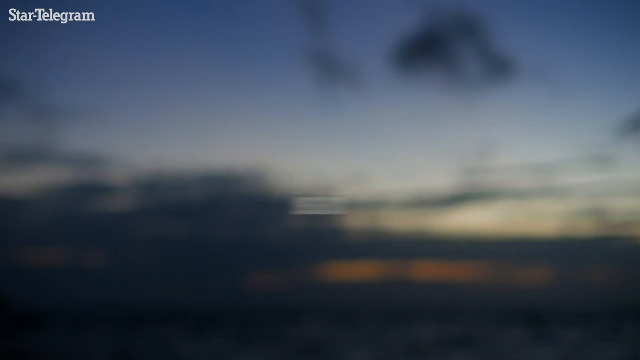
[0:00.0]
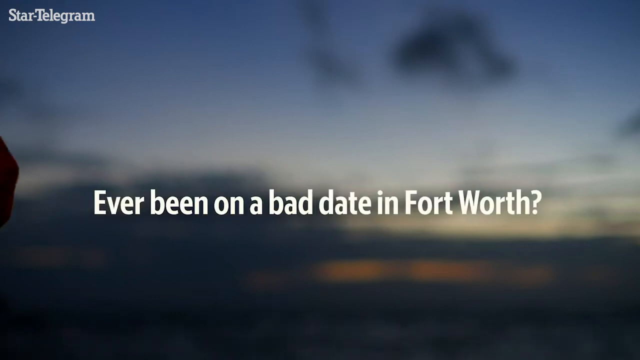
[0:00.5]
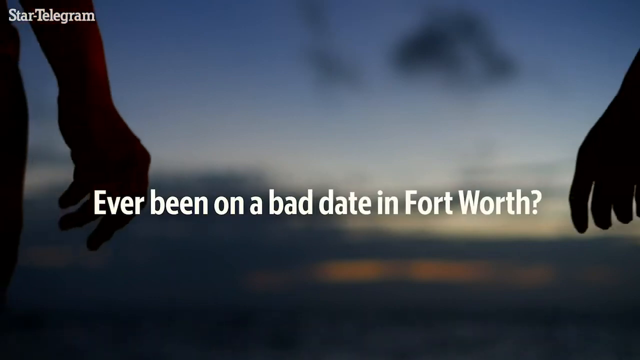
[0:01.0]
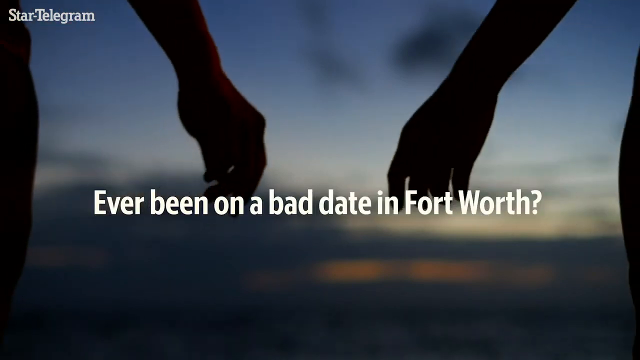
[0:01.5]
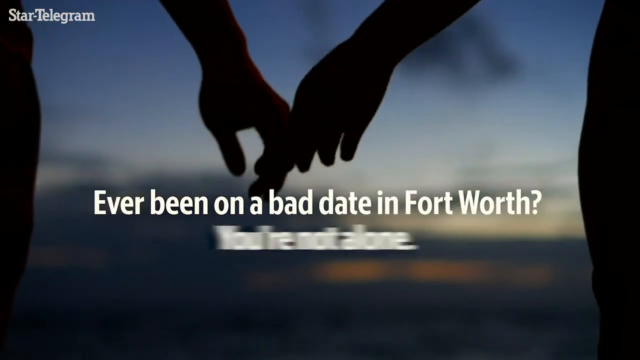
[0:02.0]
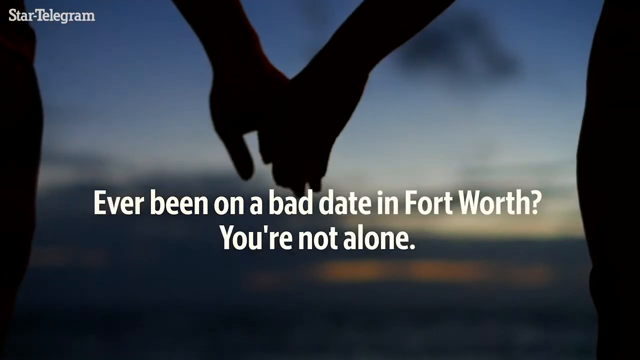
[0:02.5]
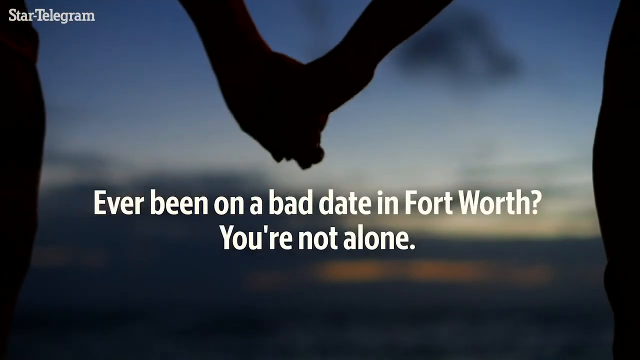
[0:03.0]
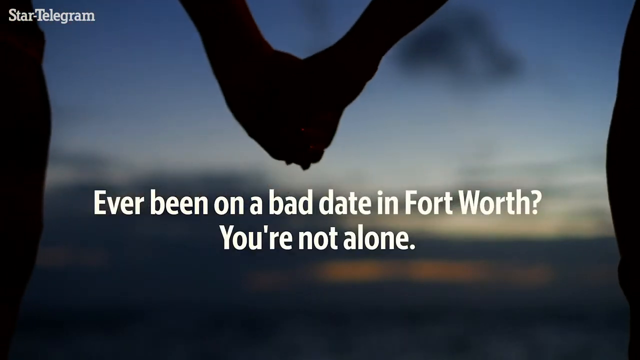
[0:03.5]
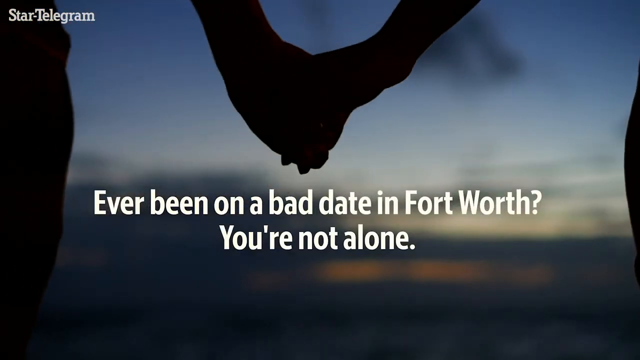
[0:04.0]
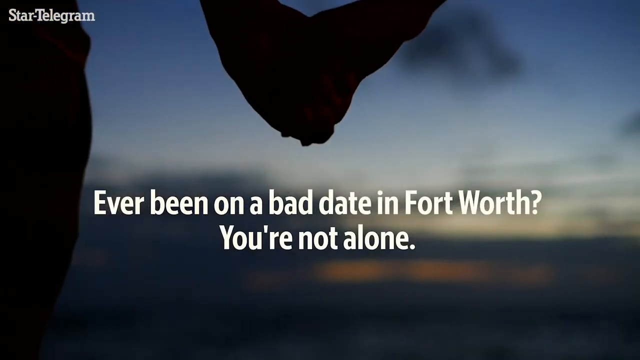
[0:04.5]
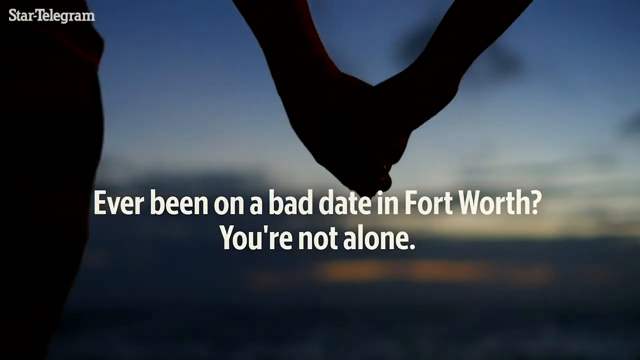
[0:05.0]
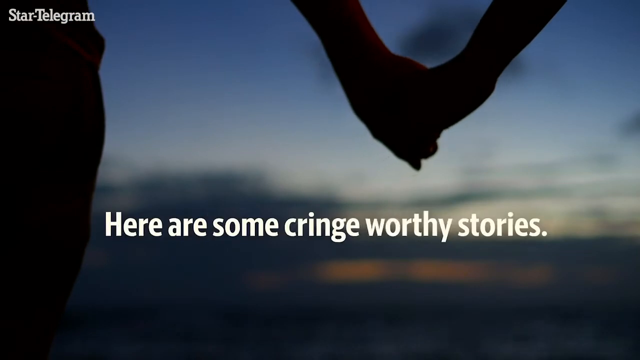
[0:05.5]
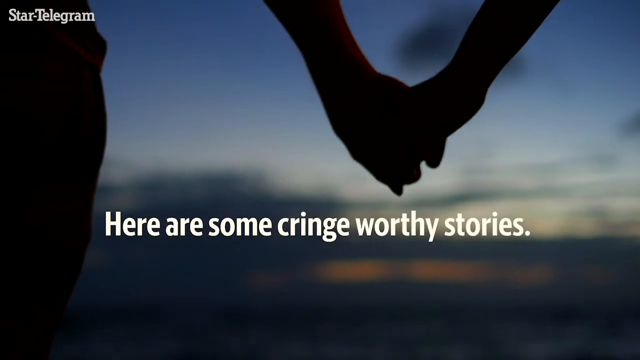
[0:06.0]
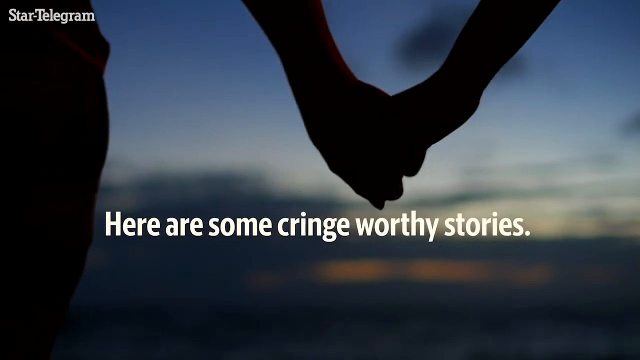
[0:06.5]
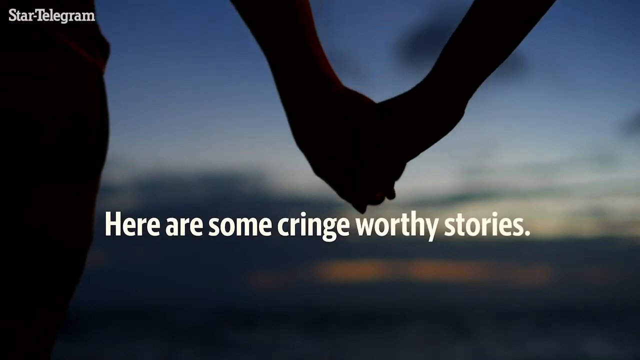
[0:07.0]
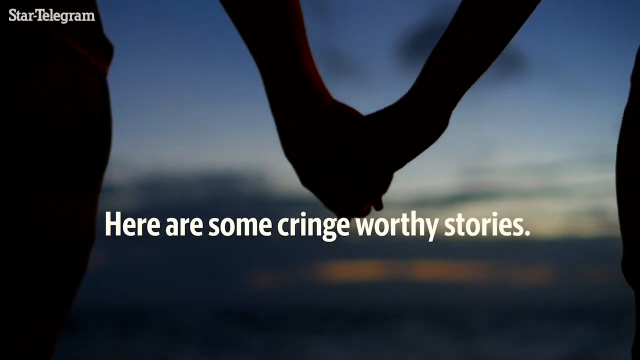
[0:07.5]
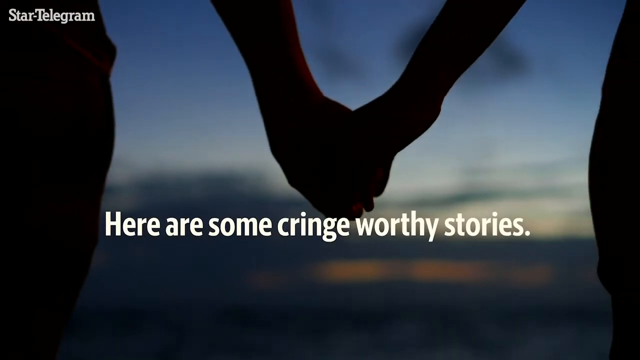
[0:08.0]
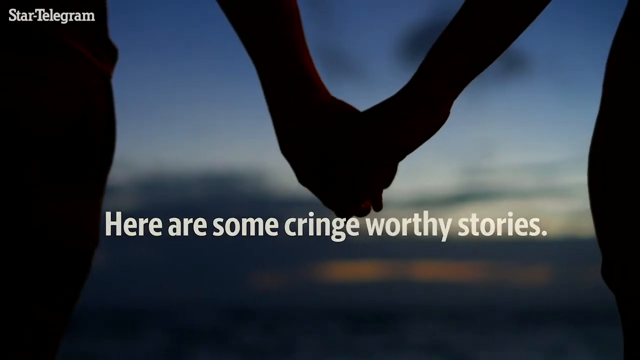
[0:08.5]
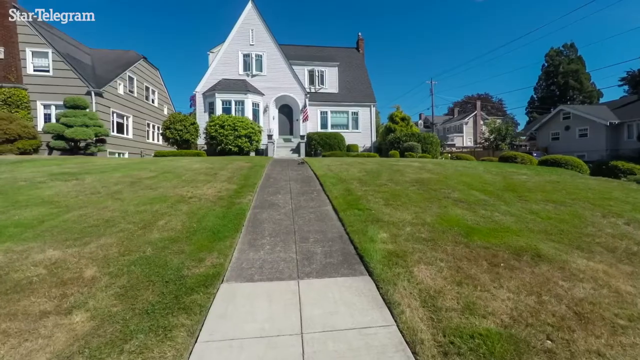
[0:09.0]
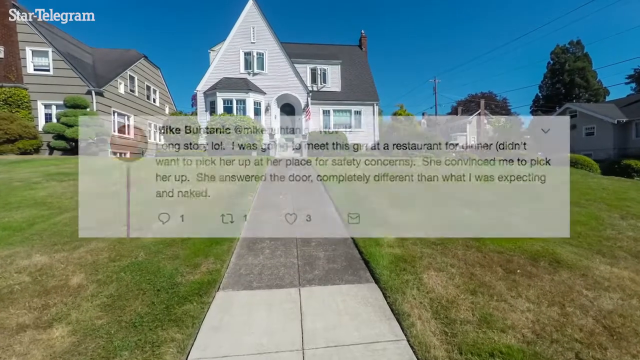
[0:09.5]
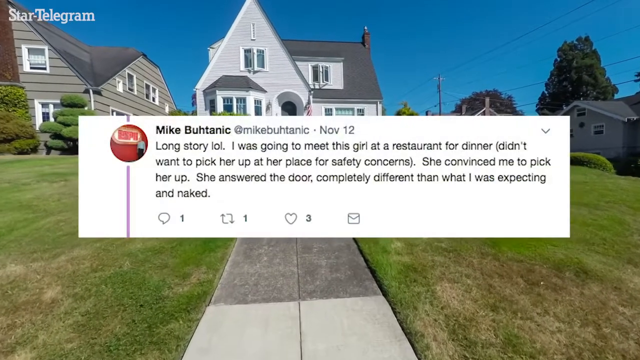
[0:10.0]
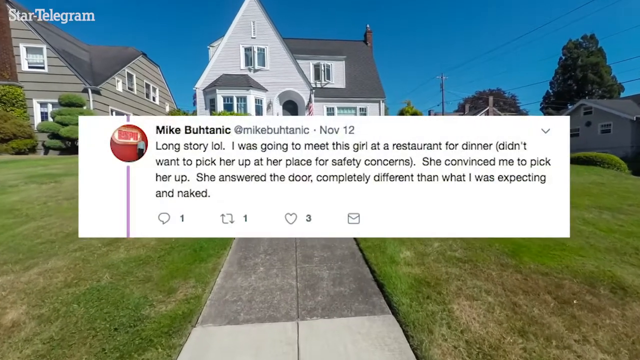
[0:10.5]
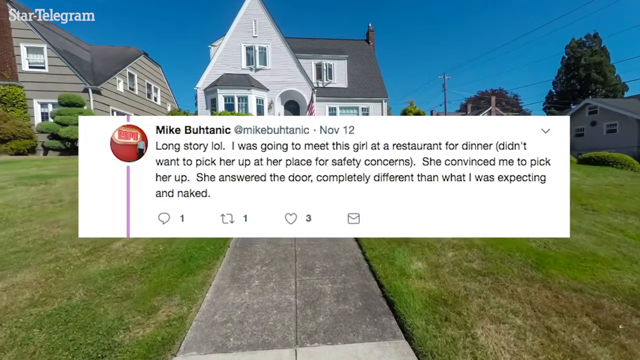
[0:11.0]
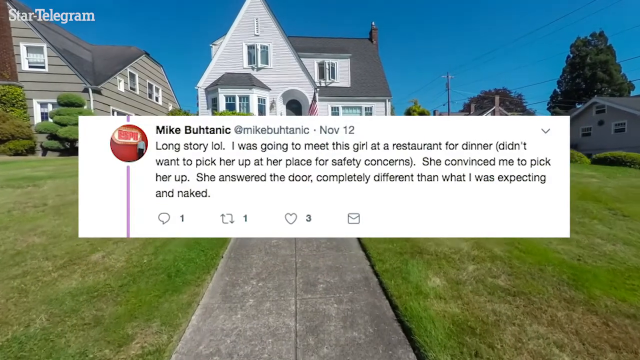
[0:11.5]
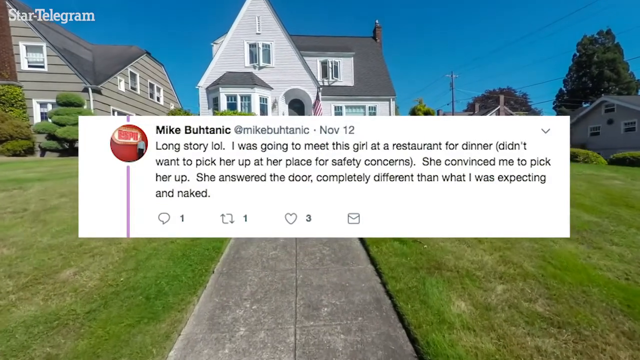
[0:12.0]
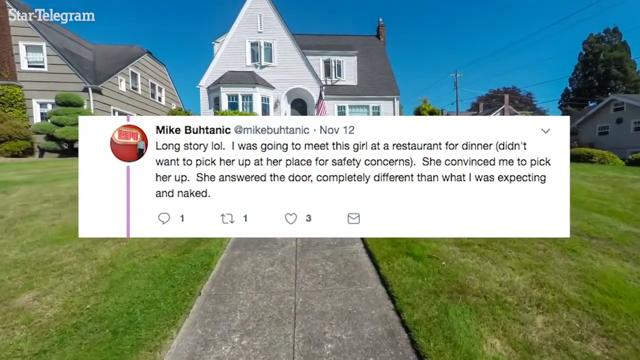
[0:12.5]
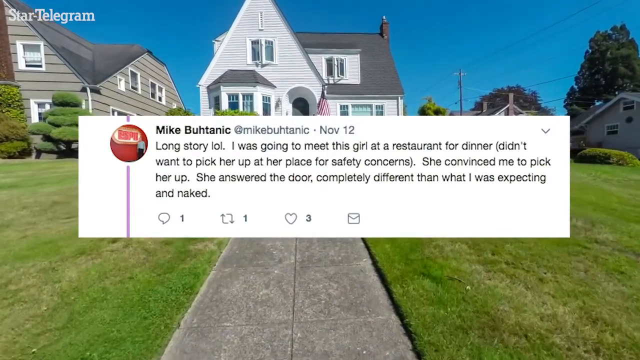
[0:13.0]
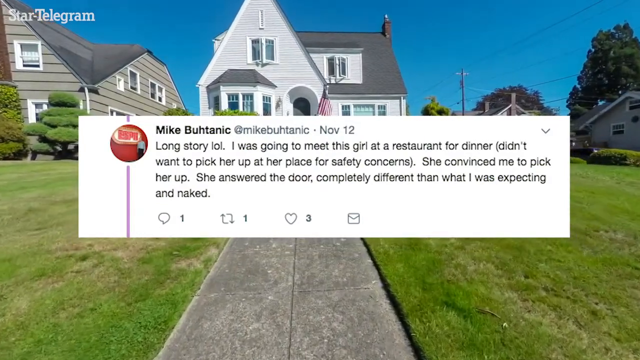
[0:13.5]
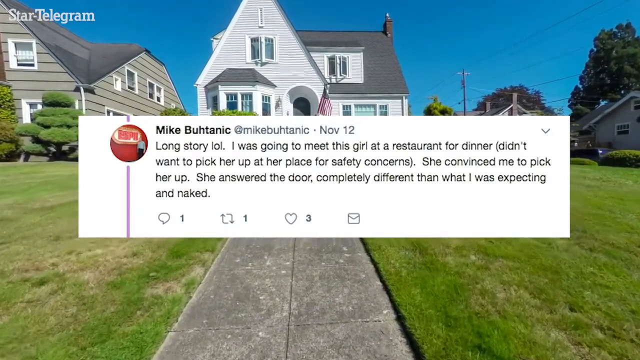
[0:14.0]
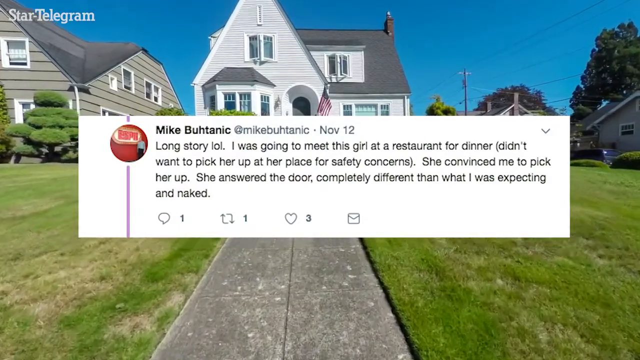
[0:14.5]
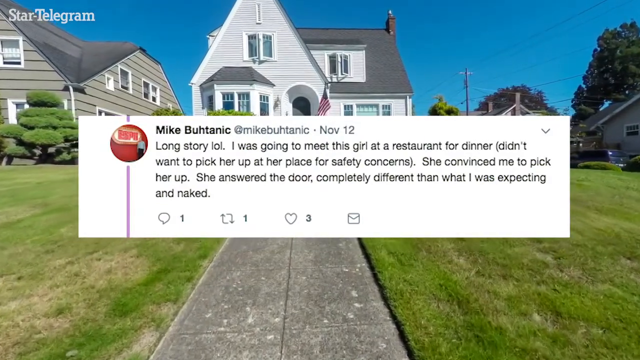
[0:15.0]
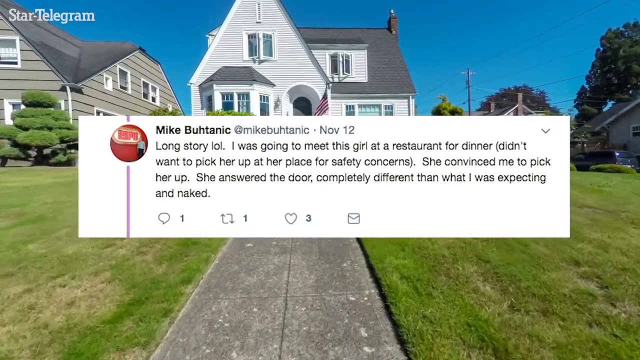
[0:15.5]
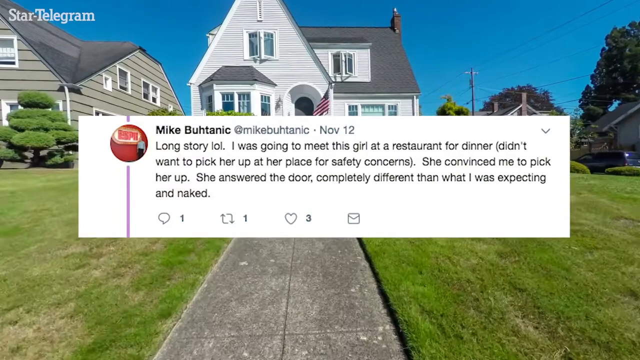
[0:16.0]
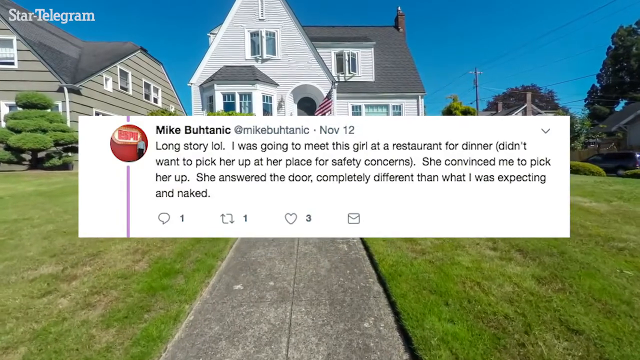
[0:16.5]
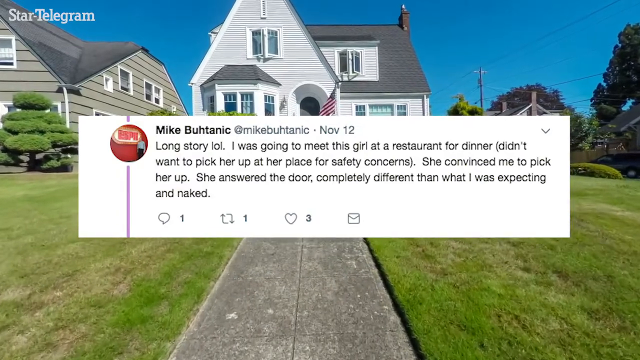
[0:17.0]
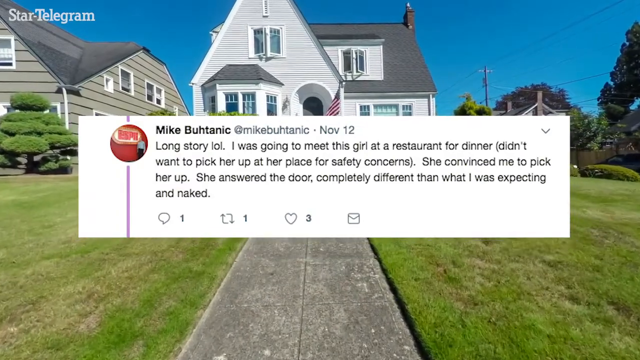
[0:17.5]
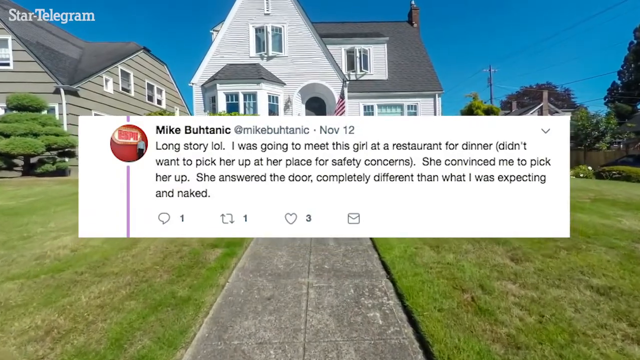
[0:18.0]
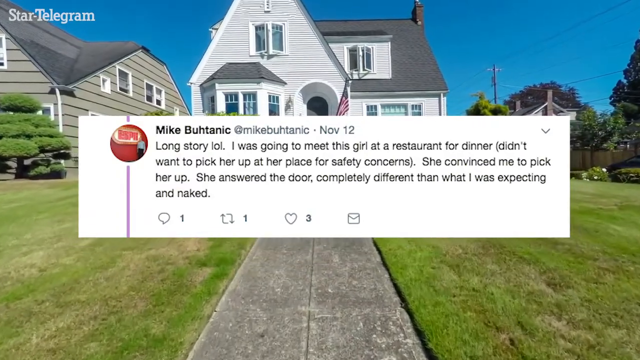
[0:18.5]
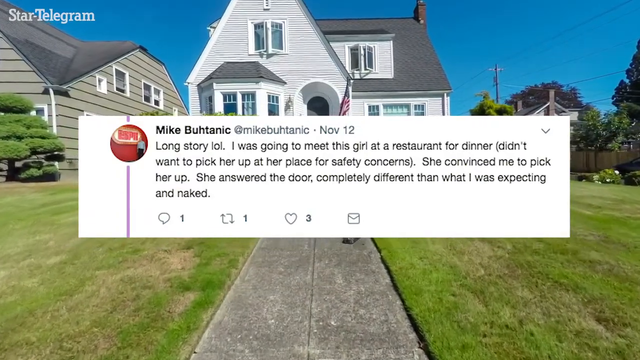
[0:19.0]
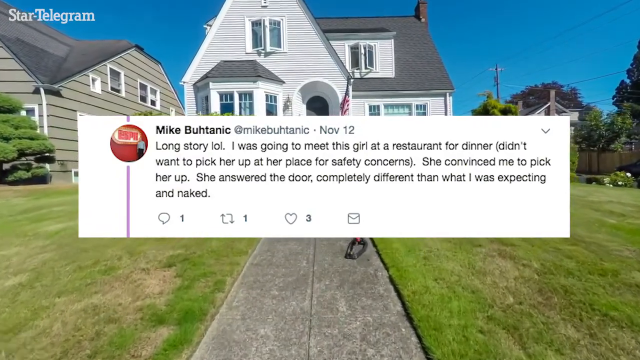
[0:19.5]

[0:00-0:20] The video opens on two hands joined together in a romantic gesture, possibly a man's and a woman's; it looks like they are beside a beach. On-screen text reads "ever been on a bad date in Fort Worth? You are not alone. Here are some cringeworthy stories." The scene then shows a pavement and two buildings: one is ash in color with a black roof, and the other is white with a black roof. Each building has about five windows. The camera moves toward the white building. There are other buildings beside the white building, and there is an American flag in front of it. Text reads "Long story", followed by the detailed story on the screen.